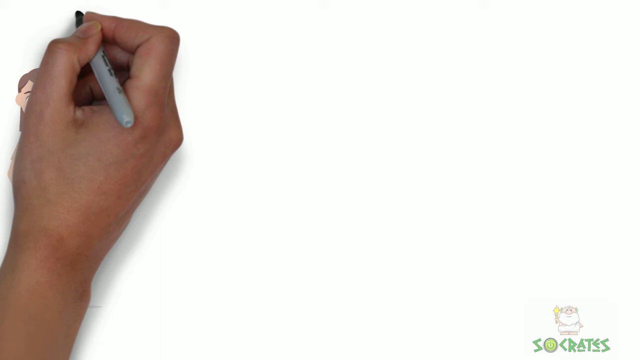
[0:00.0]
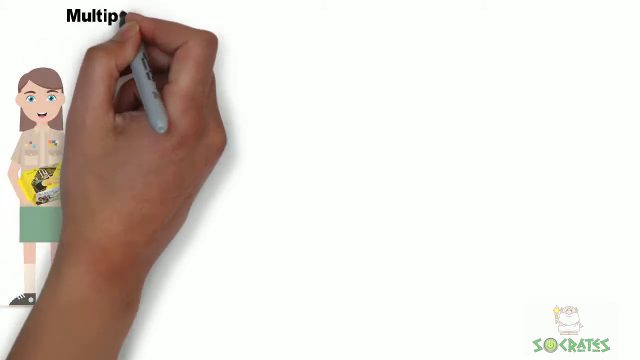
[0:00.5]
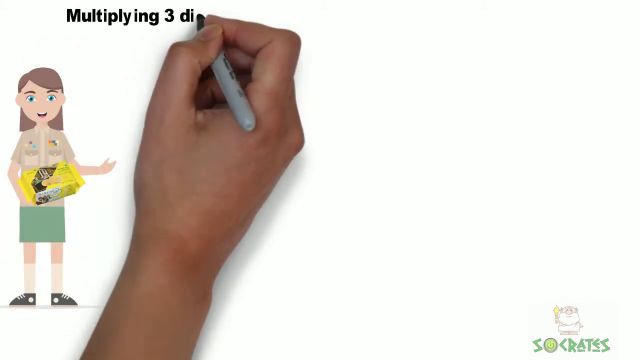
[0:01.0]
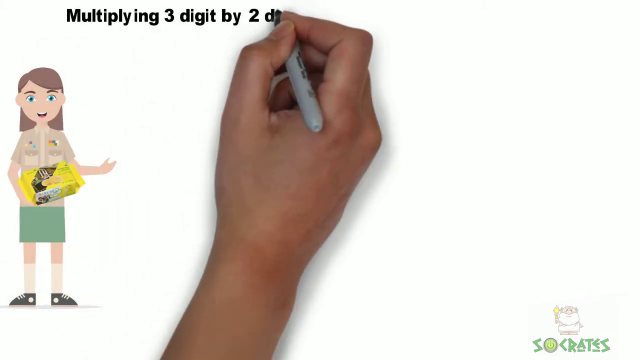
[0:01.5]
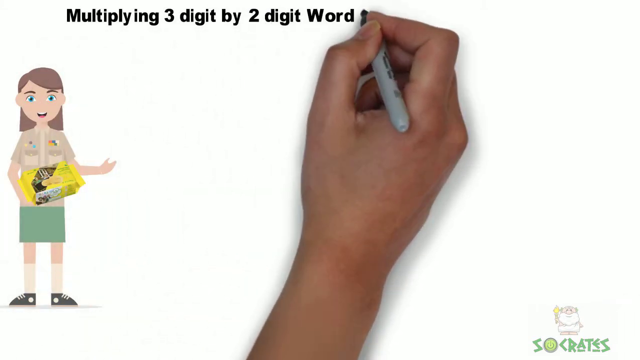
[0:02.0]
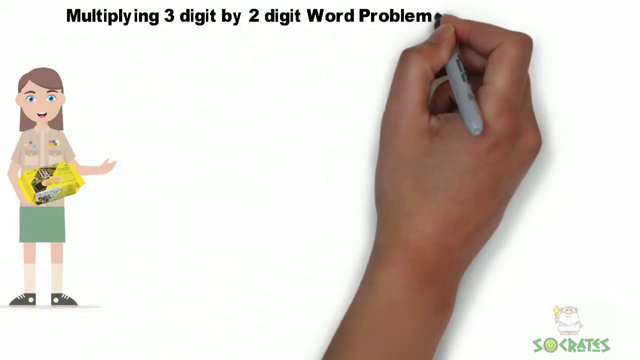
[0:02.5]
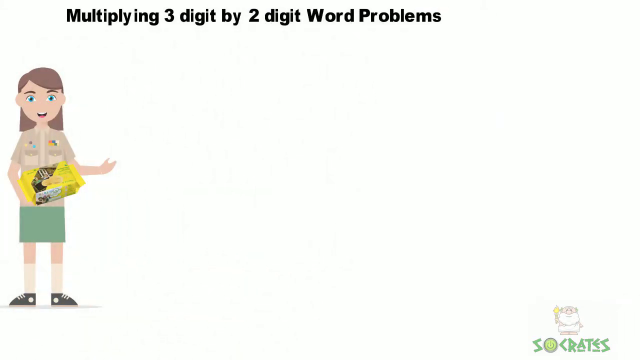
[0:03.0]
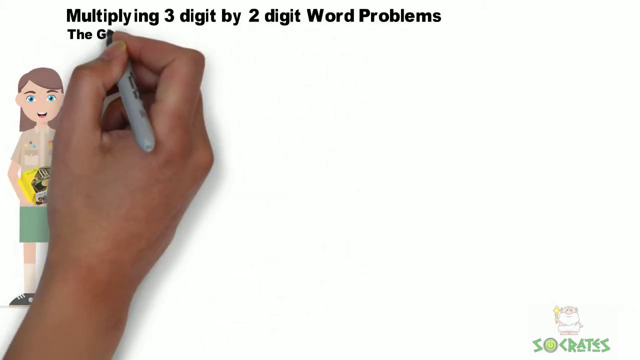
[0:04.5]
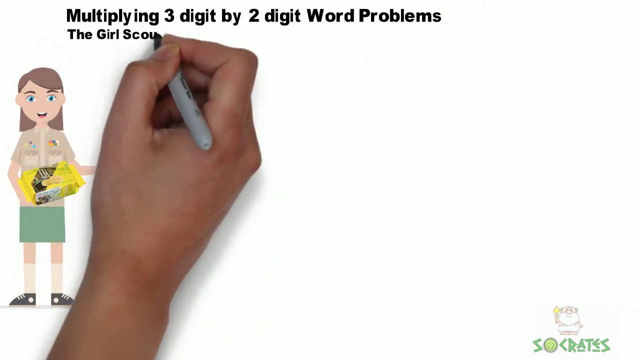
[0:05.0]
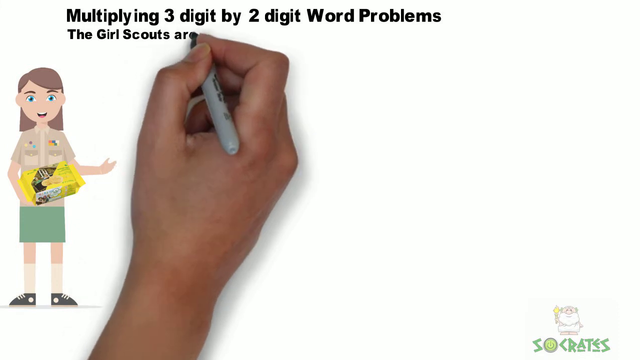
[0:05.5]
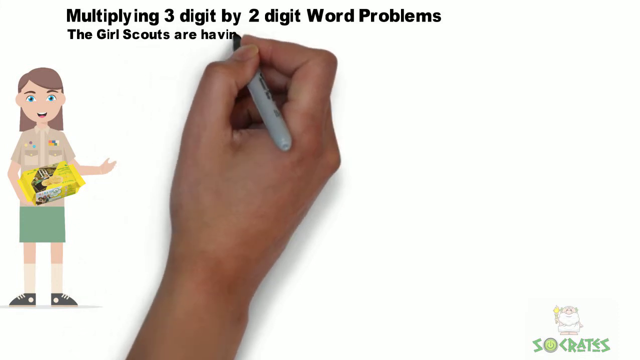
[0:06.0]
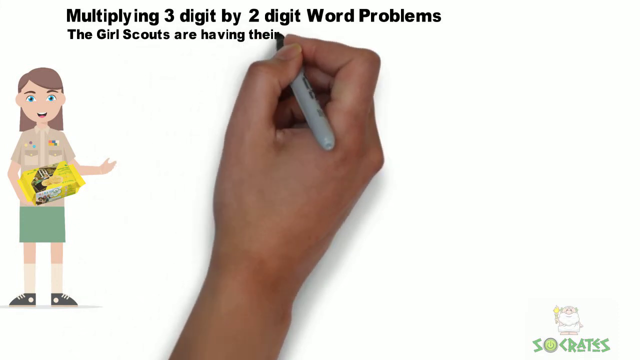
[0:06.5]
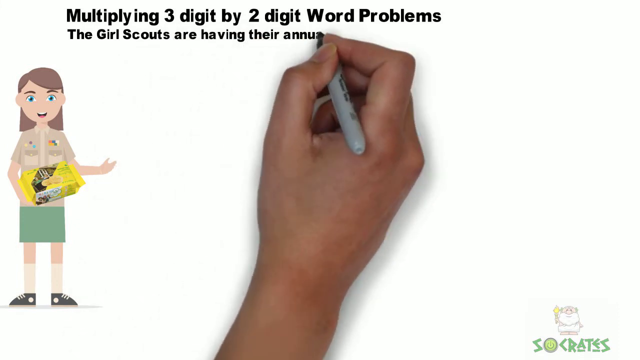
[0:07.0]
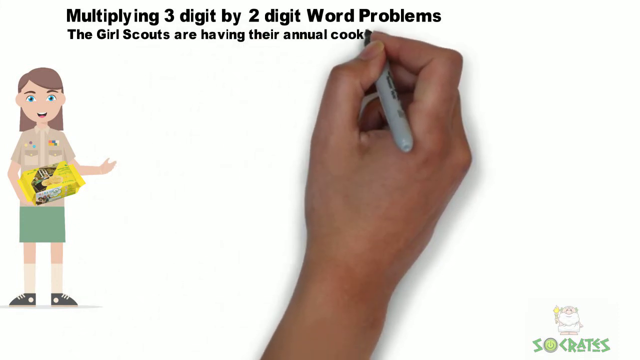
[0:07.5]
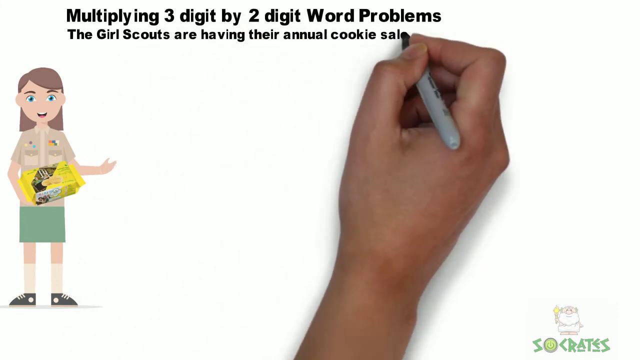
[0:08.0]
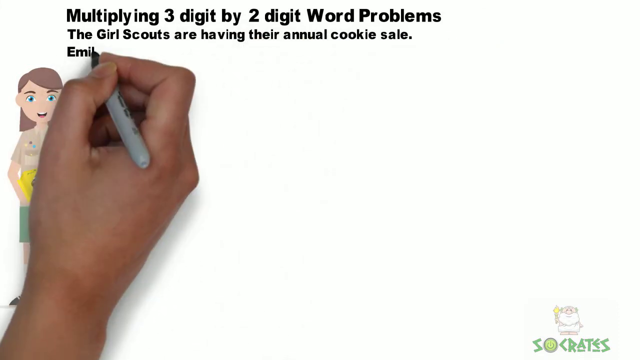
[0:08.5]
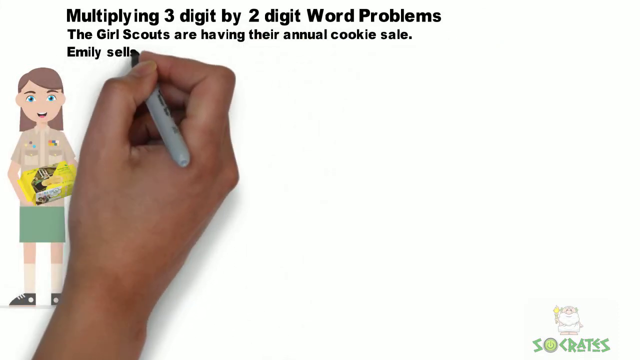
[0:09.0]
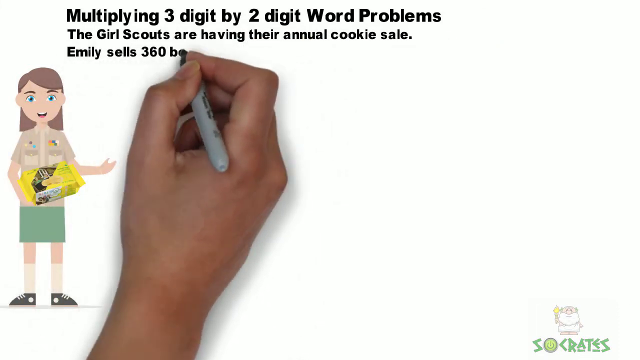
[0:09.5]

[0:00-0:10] A hand belonging to someone of Caucasian descent, possibly a woman, holds a black Sharpie with the classic gray body and black tip. The scene is set against a white background and seems to be a digital slide. On the left-hand side of the screen is what looks like a cartoon-style digital Girl Scout. She wears a green skirt, high white socks and shoes, and the traditional light brown Girl Scout top with what look like pins or badges on it. She has brown hair and bluish eyes. At the top of the screen the hand writes "multiplying three digit by two digit word problems"; although it is written, it appears as typed text. Below it the text reads "The Girl Scouts are having their annual cookie sale. Emily sells 360 boxes of cookies."